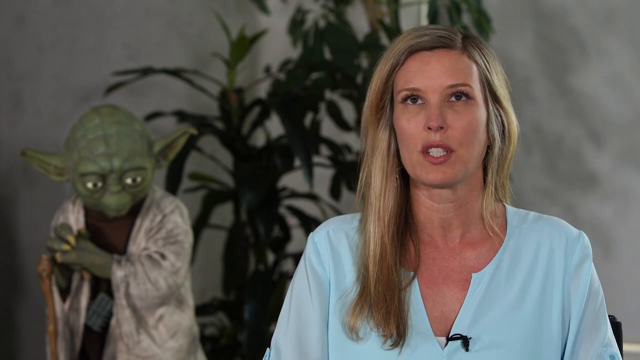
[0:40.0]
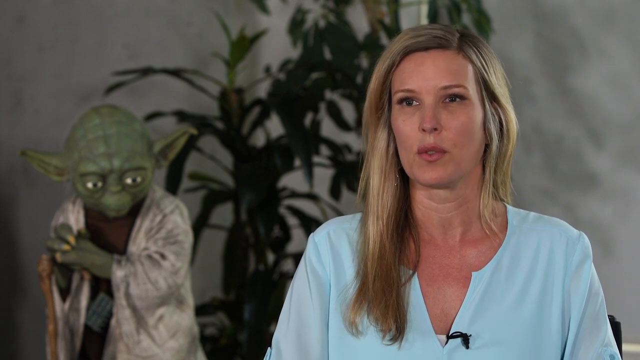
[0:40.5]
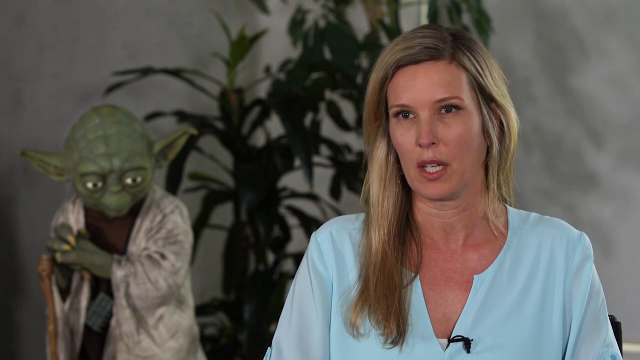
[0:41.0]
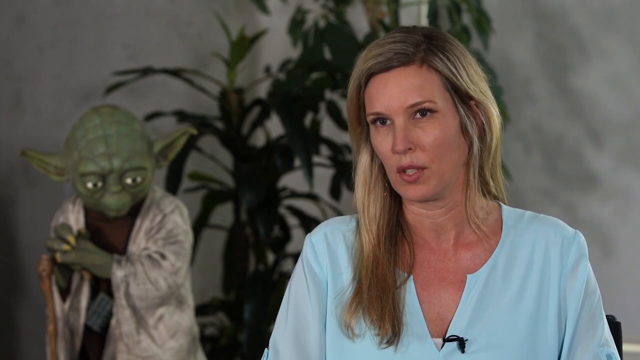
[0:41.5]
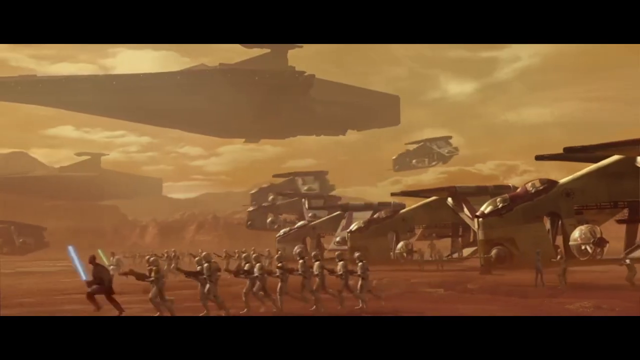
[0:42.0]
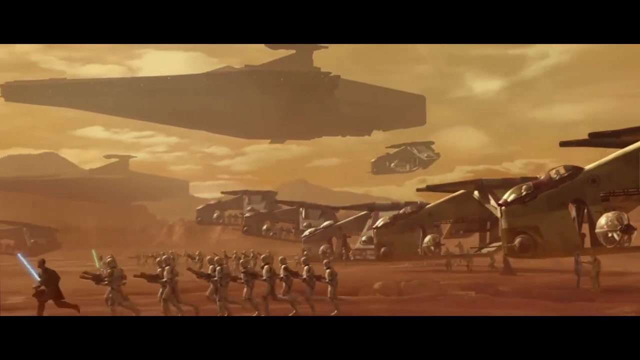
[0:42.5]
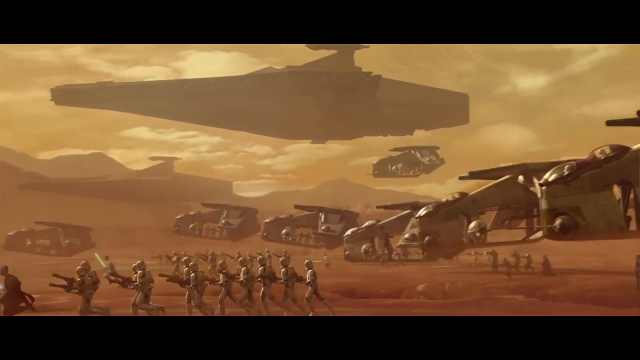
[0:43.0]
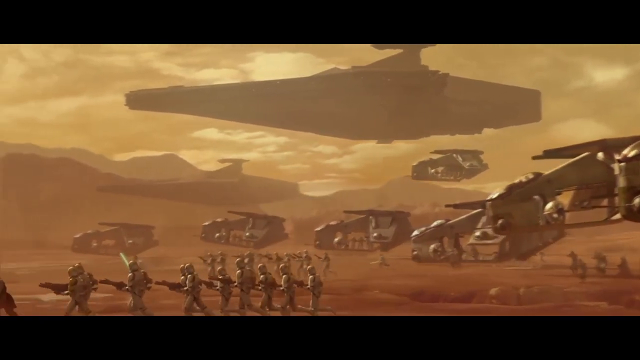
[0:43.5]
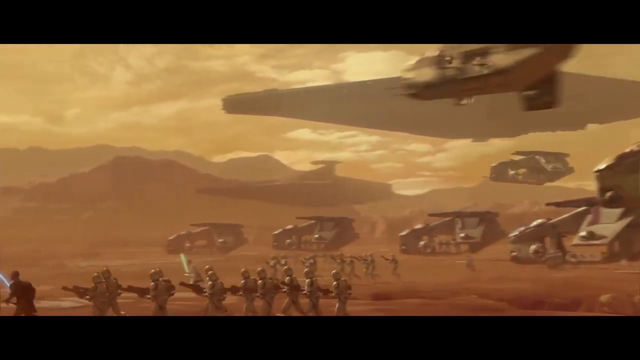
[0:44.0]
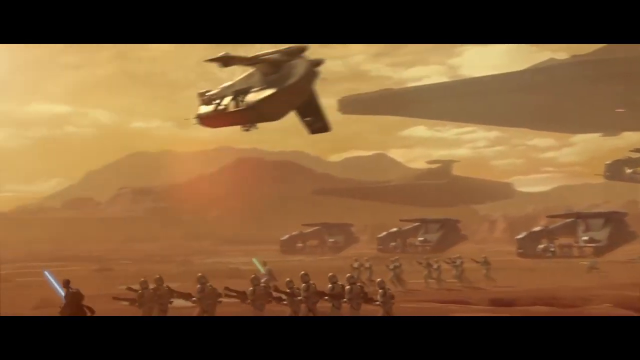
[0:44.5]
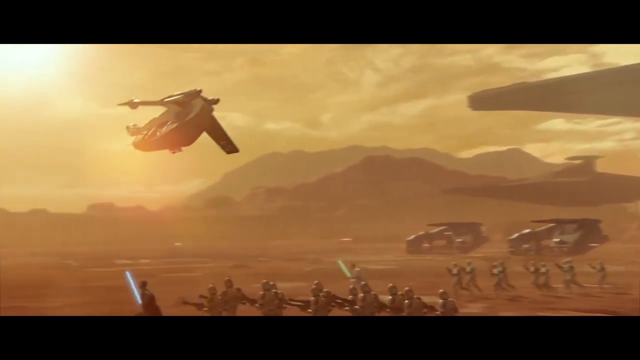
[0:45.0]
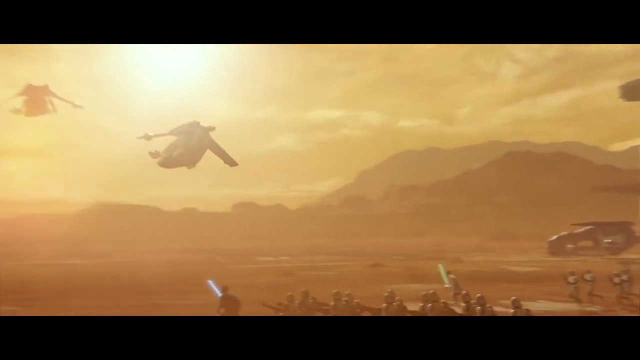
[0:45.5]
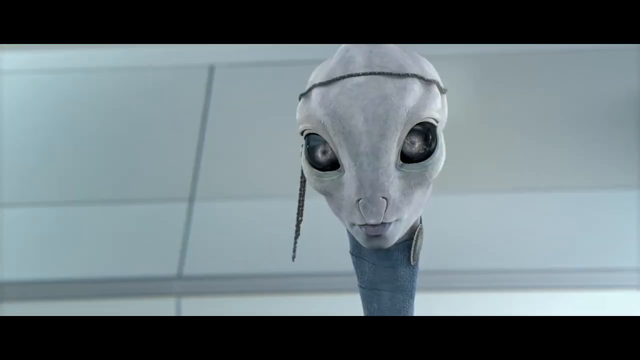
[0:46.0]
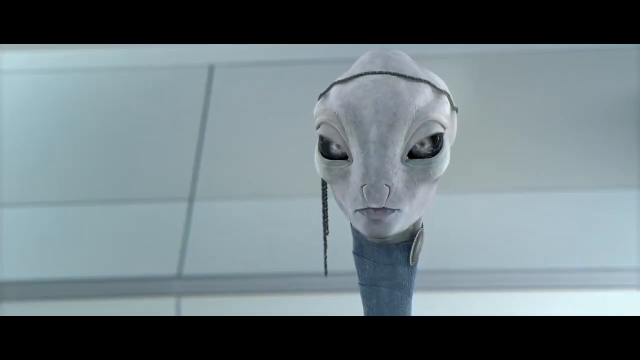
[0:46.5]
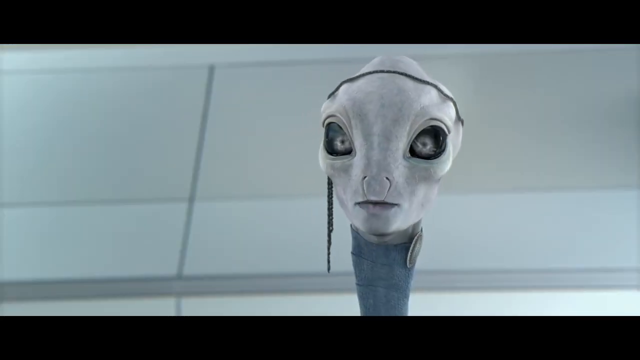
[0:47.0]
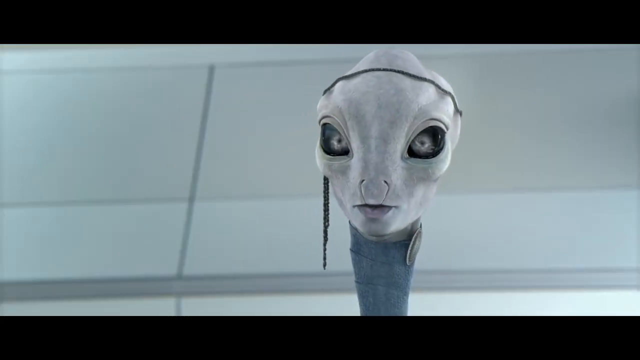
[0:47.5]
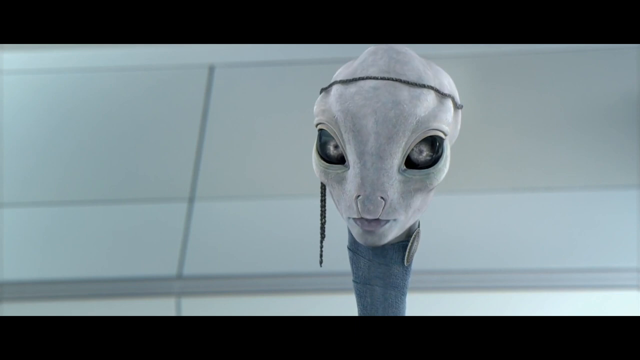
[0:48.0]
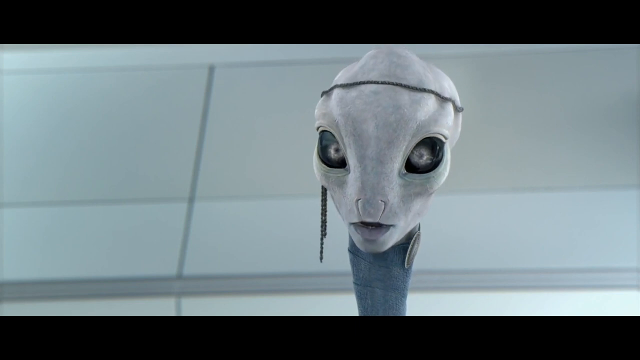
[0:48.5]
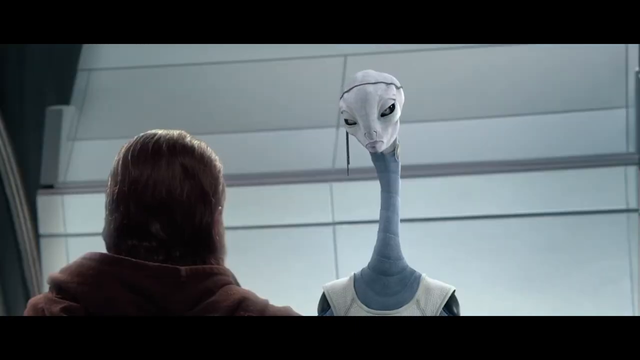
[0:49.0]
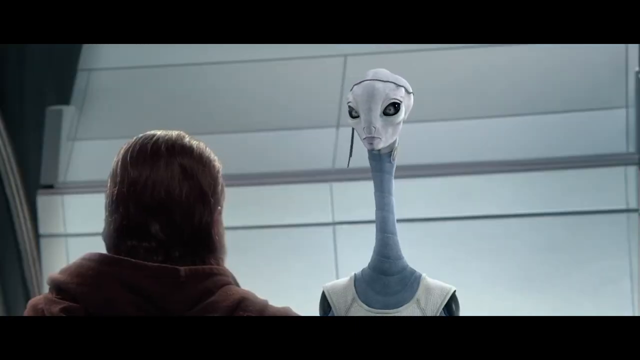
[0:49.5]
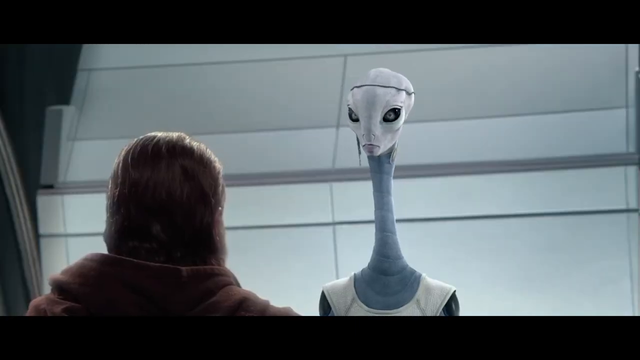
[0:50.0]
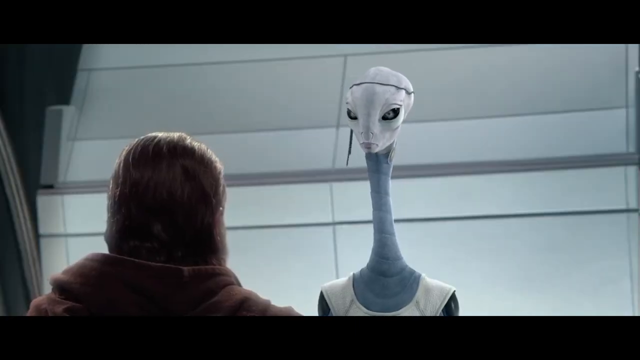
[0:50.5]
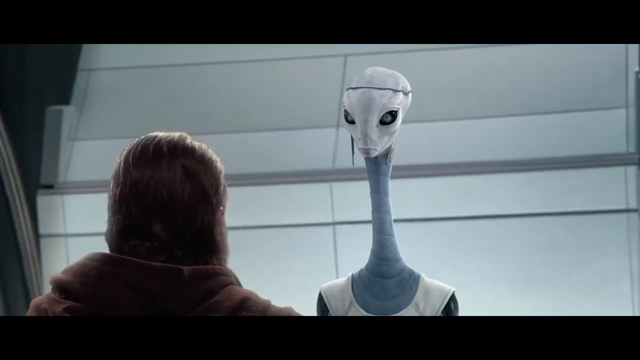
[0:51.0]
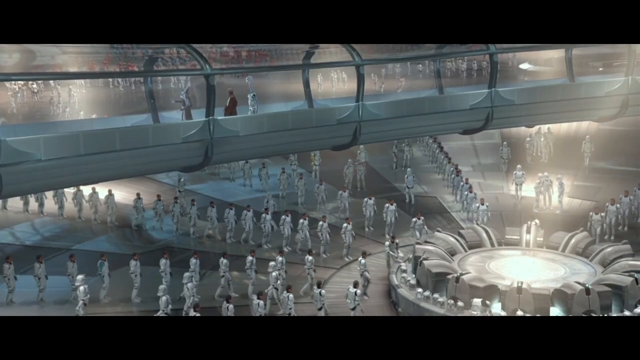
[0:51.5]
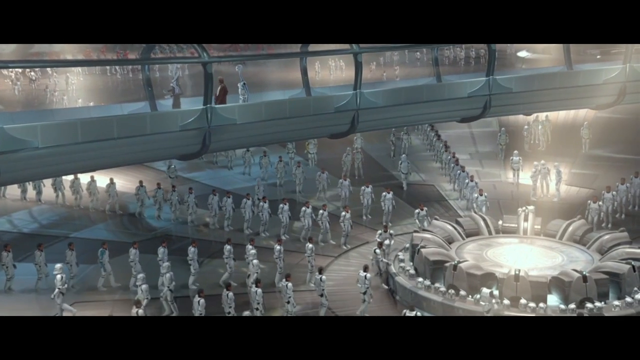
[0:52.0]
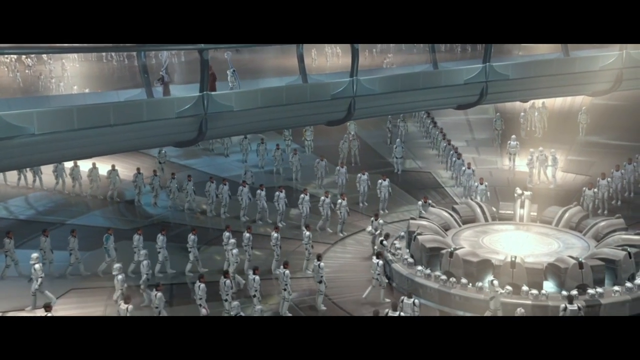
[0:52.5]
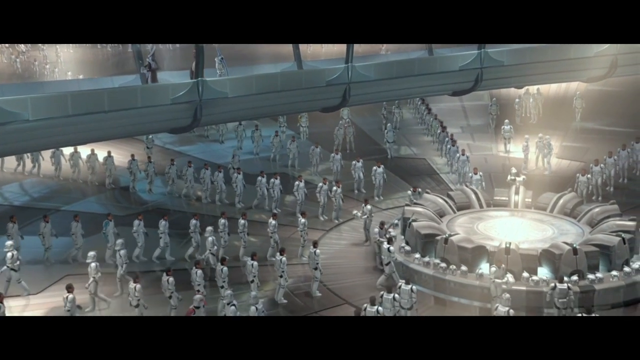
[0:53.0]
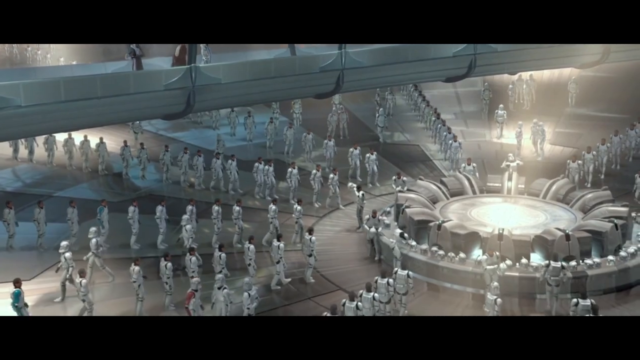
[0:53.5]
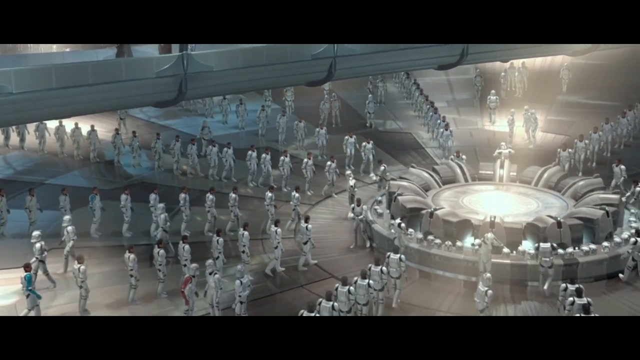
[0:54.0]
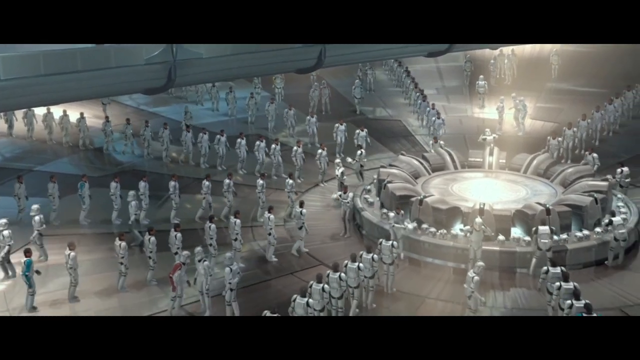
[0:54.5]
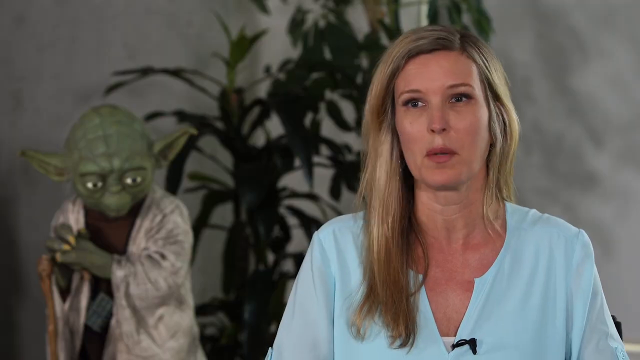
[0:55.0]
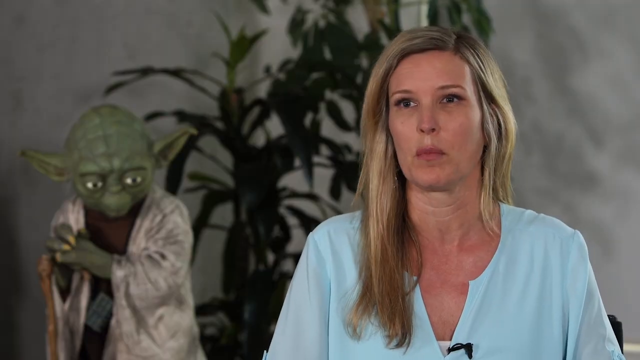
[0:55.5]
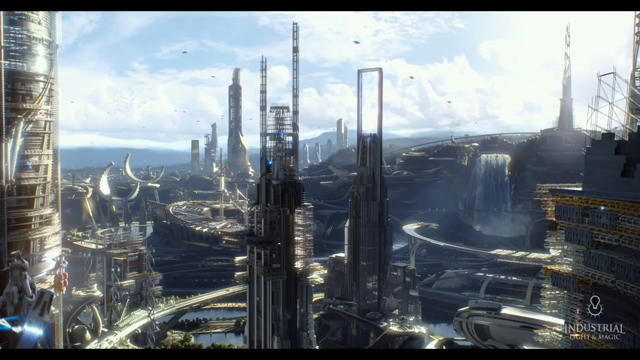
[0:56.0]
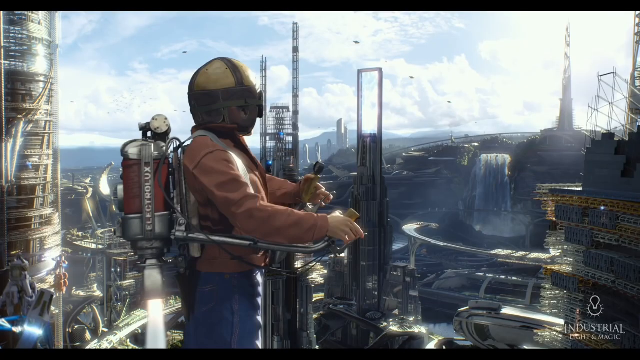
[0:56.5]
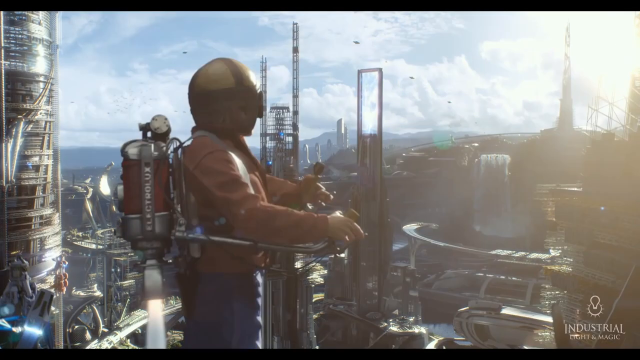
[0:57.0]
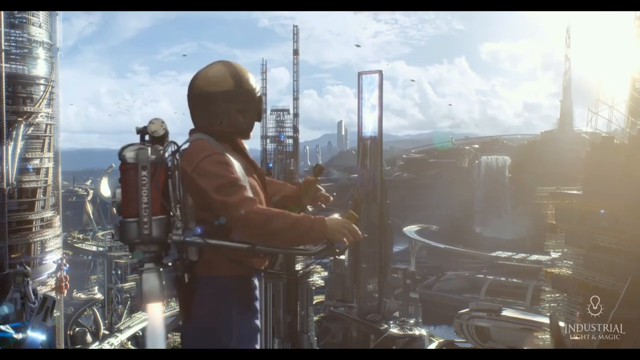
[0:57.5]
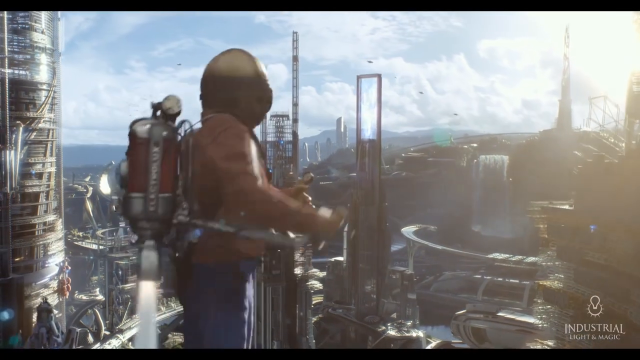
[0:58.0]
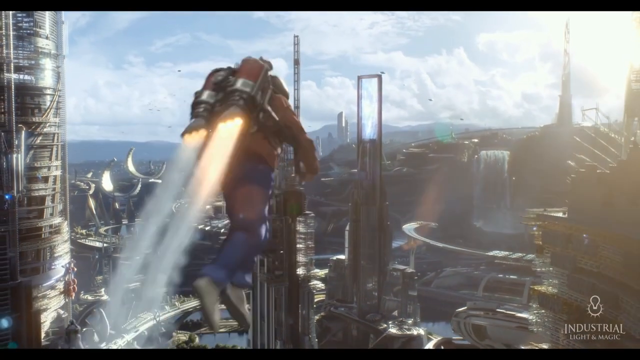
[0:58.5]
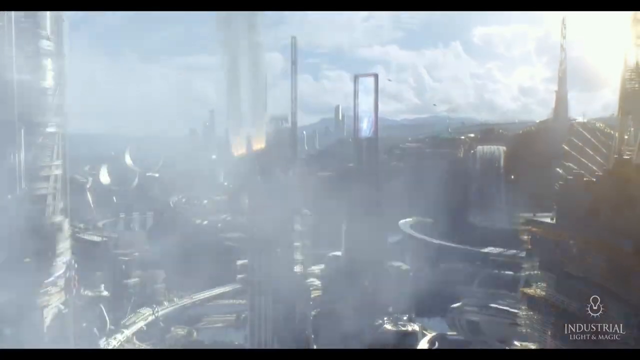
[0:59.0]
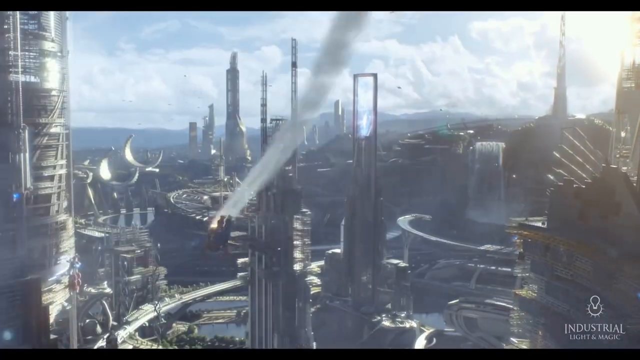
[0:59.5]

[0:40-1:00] The woman in the blue shirt has long blonde hair and sits next to a statue of Yoda, with a plant behind her. A scene follows that is most likely from one of the Star Wars movies, then another Star Wars creature talking to a younger Obi-Wan. A big scene shows all the clones gathering together, and a creature with a jet pack takes off from a building. These are mostly finished shots, a reel of completed special effects rather than in-studio footage. The video shows how many people are put on screen at once and how the jet pack figure was added to the city, which looks like it was traced in. A scene is shown as shot without the effect, and then the special effects are added to it.